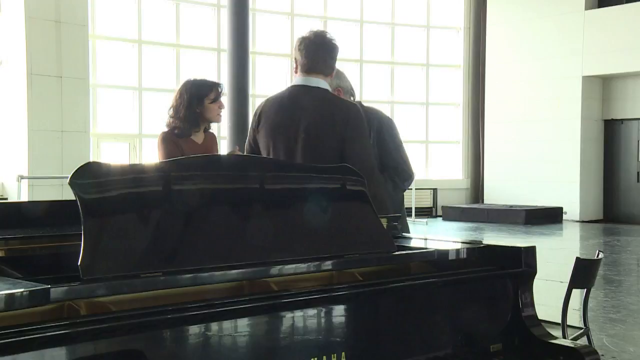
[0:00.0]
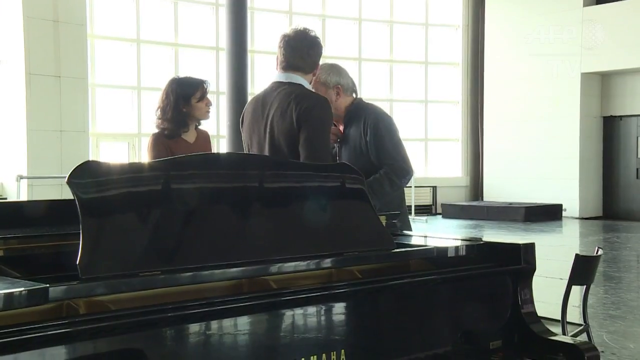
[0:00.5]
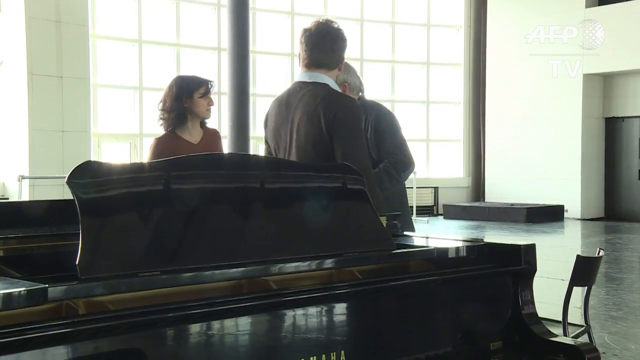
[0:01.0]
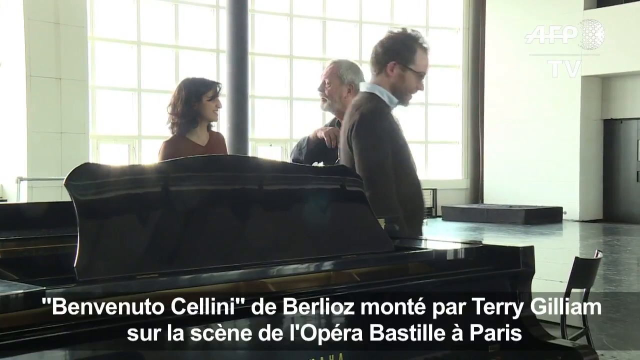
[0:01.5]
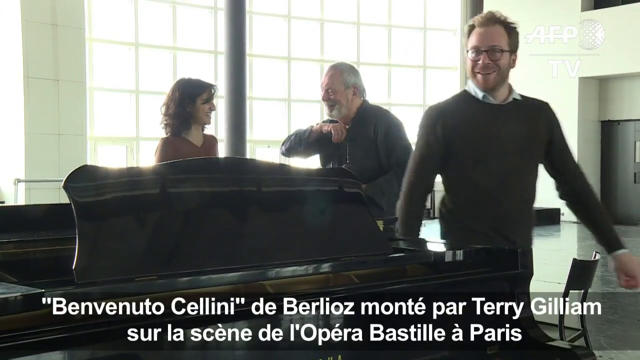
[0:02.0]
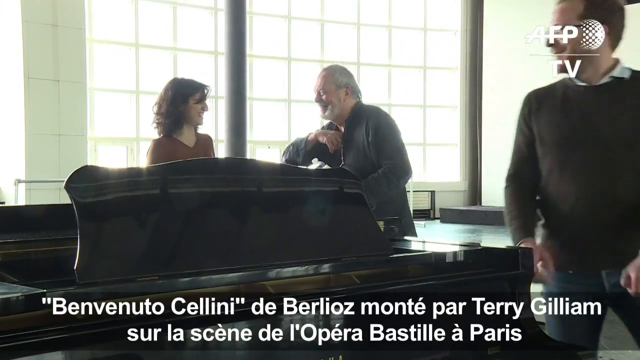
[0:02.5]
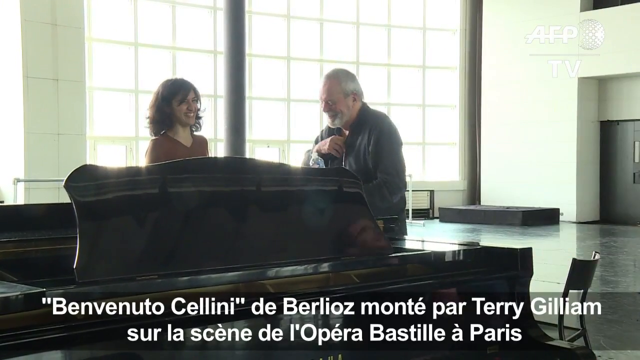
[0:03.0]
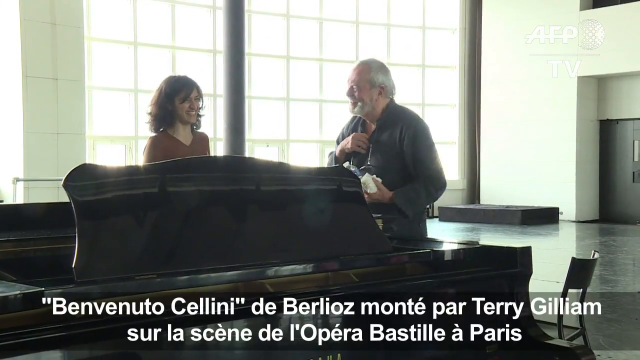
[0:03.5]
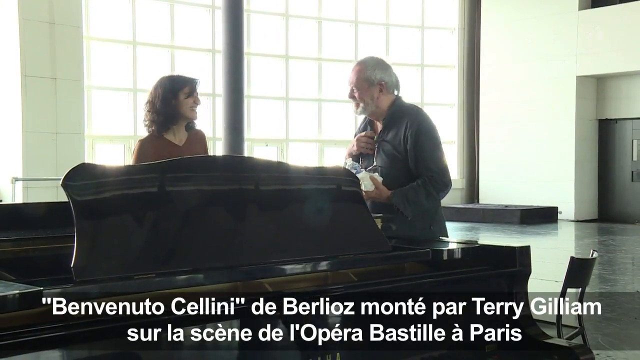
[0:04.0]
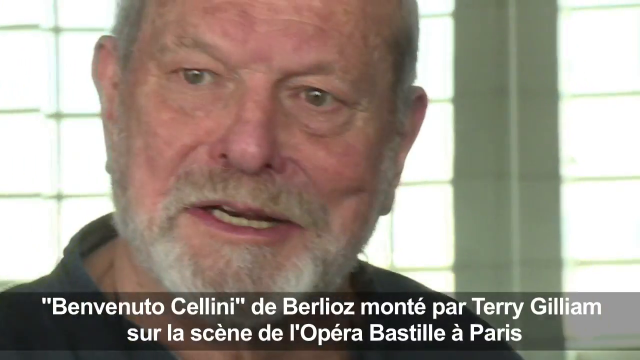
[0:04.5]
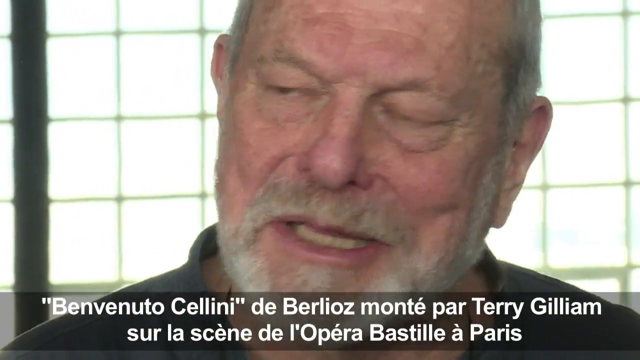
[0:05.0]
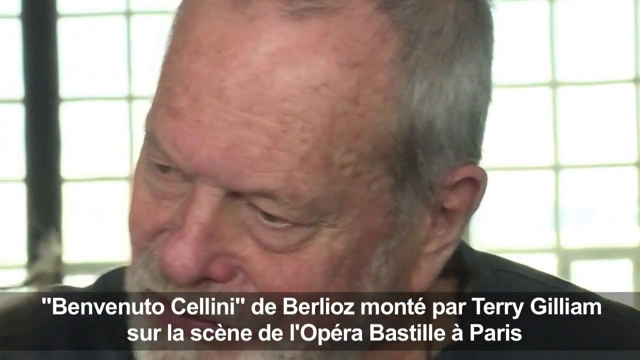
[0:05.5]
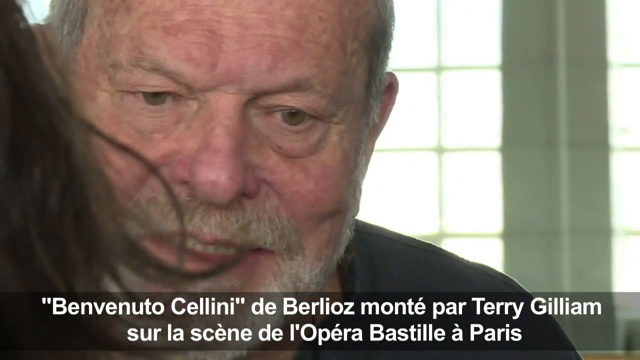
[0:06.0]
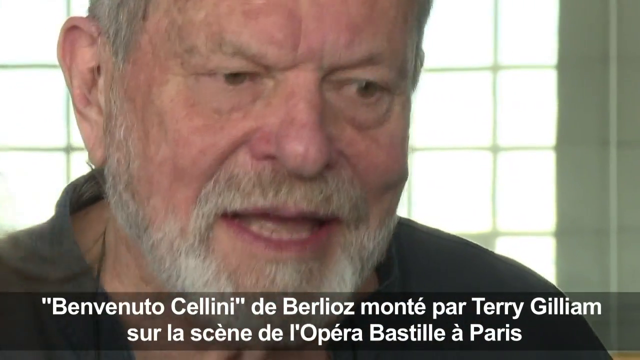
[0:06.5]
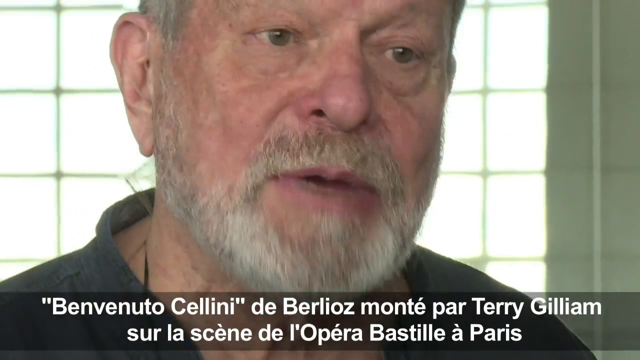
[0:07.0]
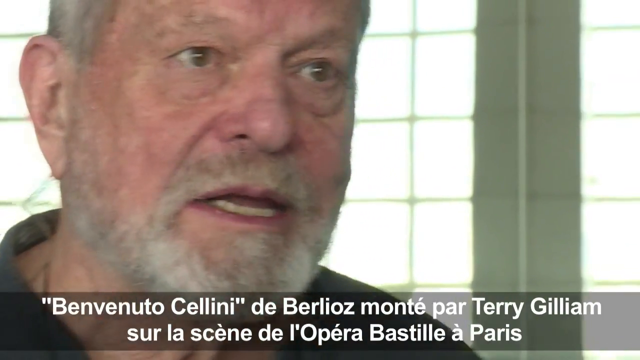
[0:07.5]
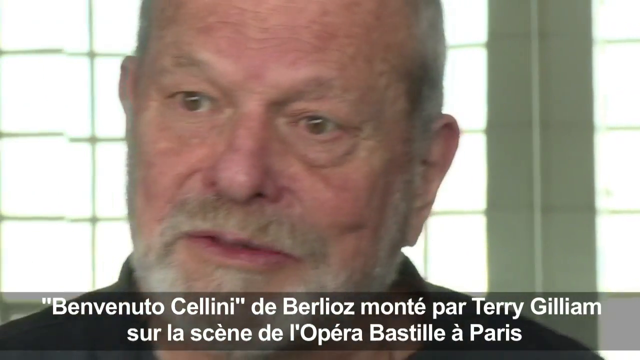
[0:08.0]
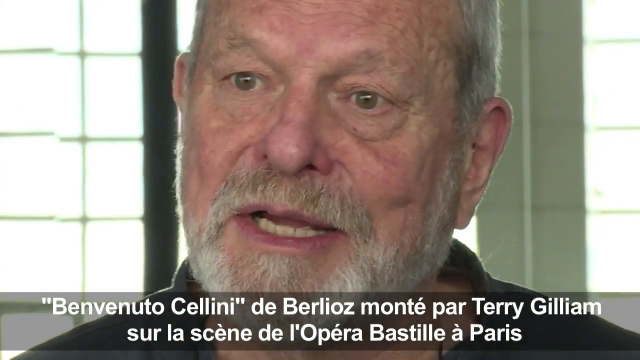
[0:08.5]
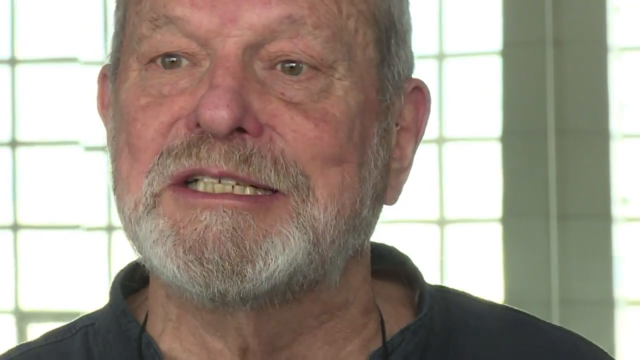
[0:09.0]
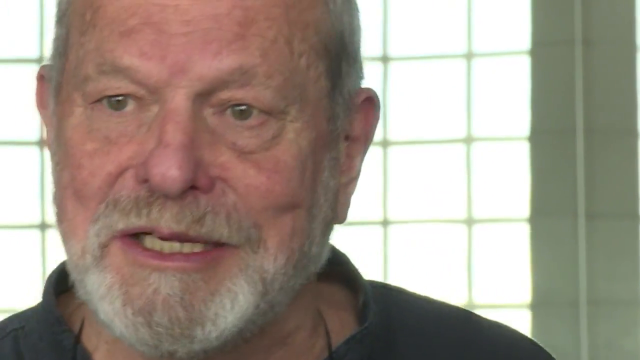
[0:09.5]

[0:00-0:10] Three people appear: two men and one woman. The woman is on the left, looking from left to right, seen from the chest up; she wears a dark sweater and has brown hair. She faces a man with gray hair, who faces from right to left. The third person, a man, is in the foreground facing both of them, with the other two in the background; he wears a white collared shirt and the back of his head is visible. He quickly turns around and starts leaving, smiling; he has glasses and brown hair, and walks out of the picture toward the right. The remaining man and woman begin to laugh, and the gray-haired man starts nodding. The video zooms in very close on his face, showing a white beard and mustache. He appears to be speaking, maybe in another language, as text at the bottom seems to translate what he says; the text is in a language other than English. He sways back and forth as he talks, shaking his head side to side and up and down. The shot then changes to a slightly zoomed-out view showing him from the chest up, and his arms might be crossed.